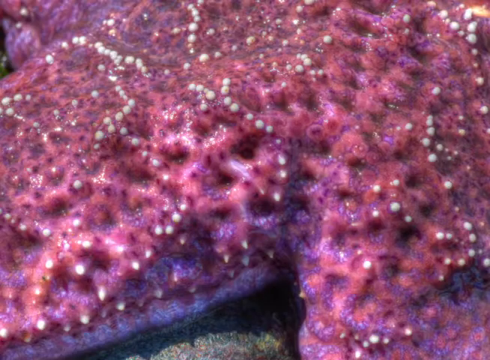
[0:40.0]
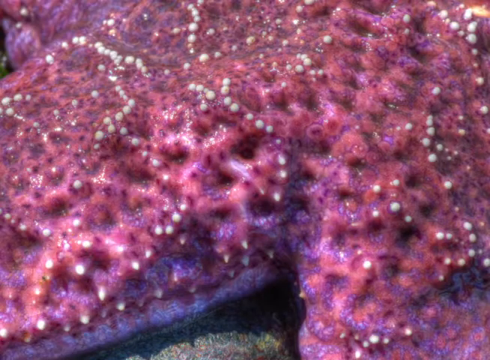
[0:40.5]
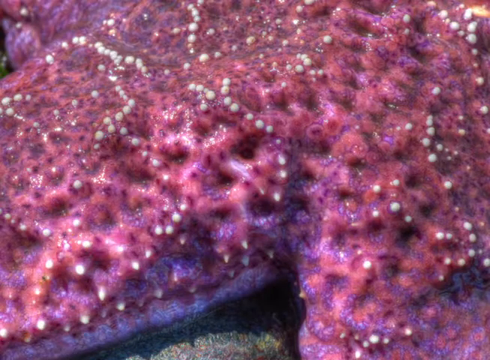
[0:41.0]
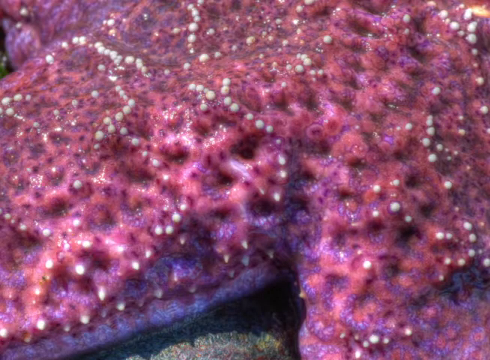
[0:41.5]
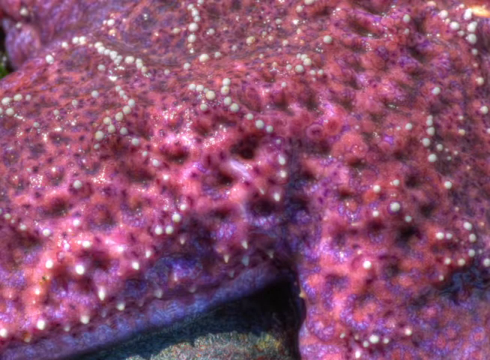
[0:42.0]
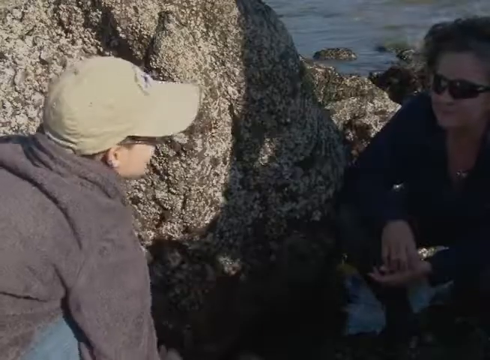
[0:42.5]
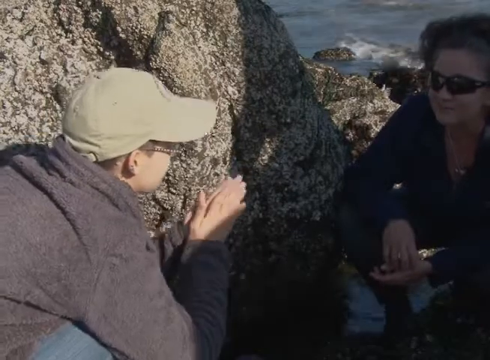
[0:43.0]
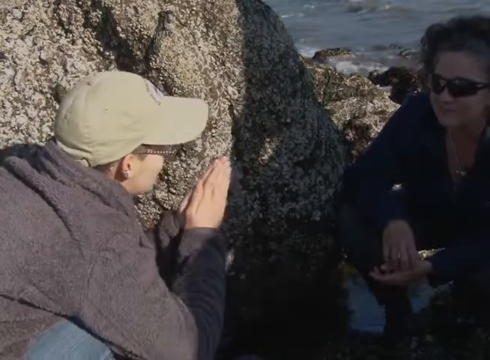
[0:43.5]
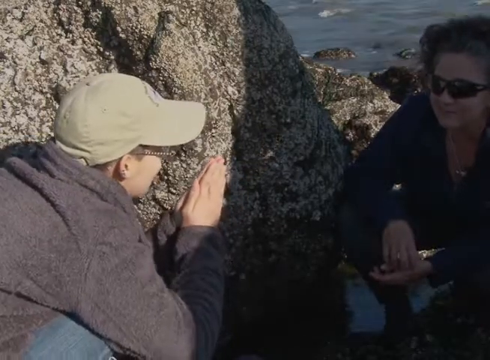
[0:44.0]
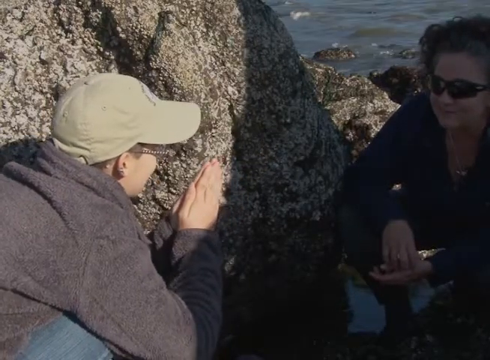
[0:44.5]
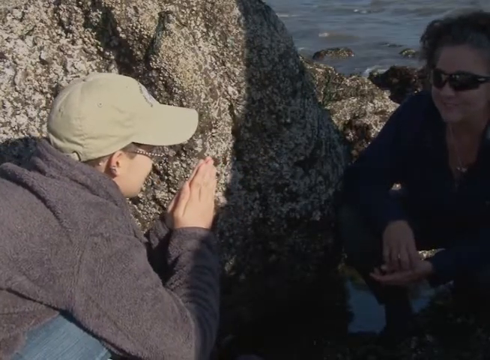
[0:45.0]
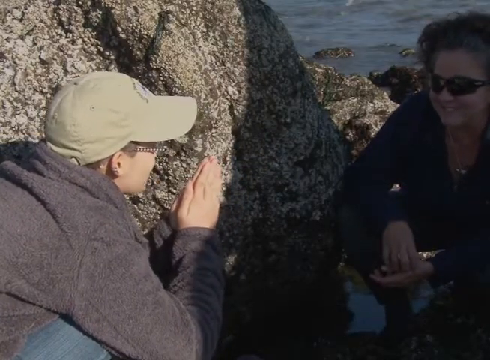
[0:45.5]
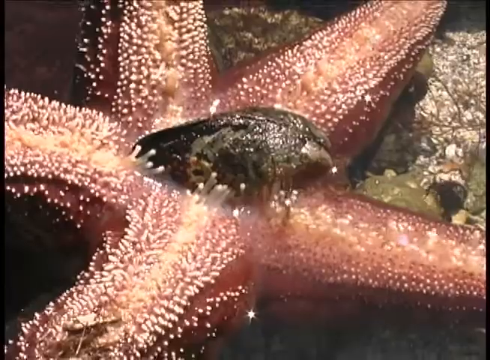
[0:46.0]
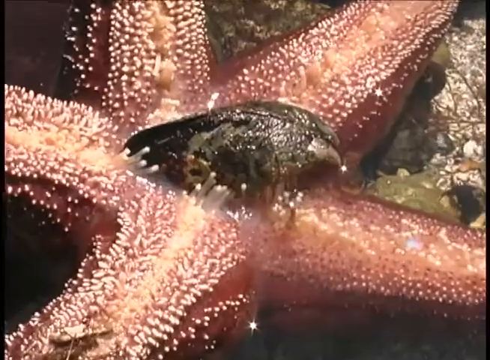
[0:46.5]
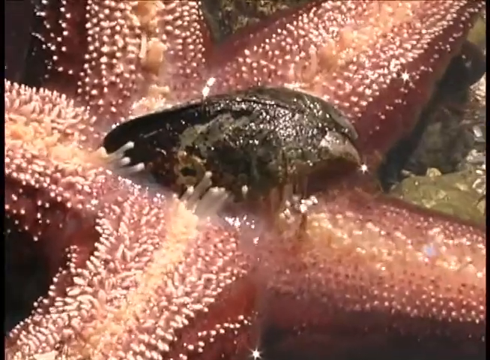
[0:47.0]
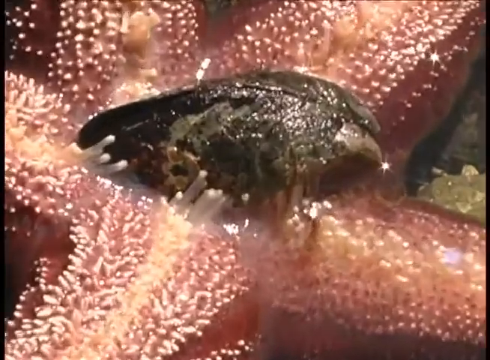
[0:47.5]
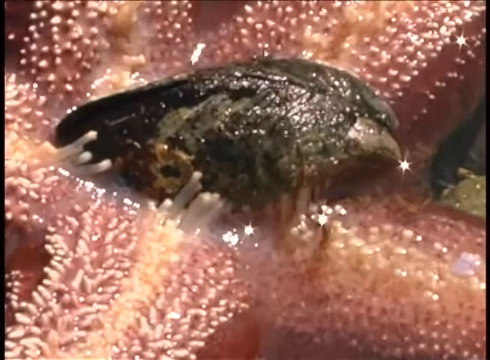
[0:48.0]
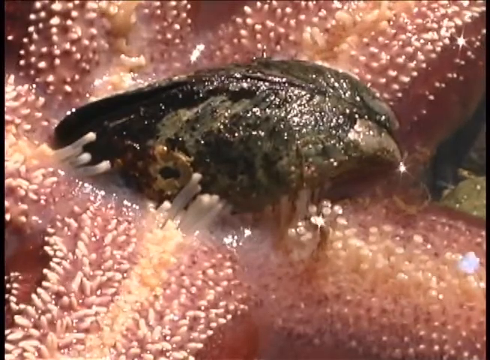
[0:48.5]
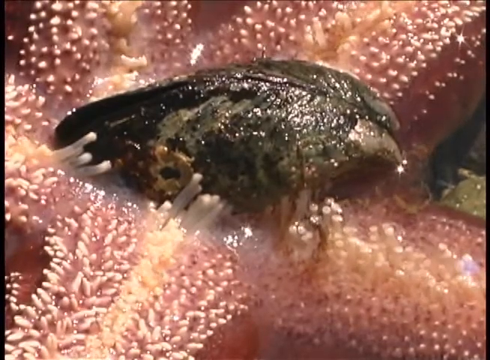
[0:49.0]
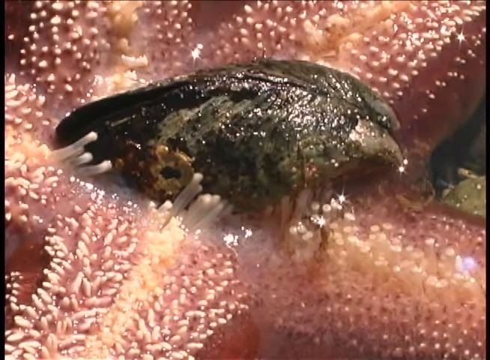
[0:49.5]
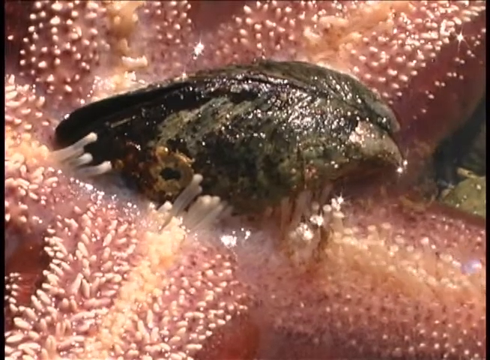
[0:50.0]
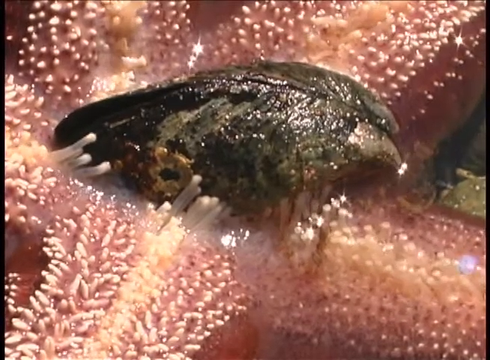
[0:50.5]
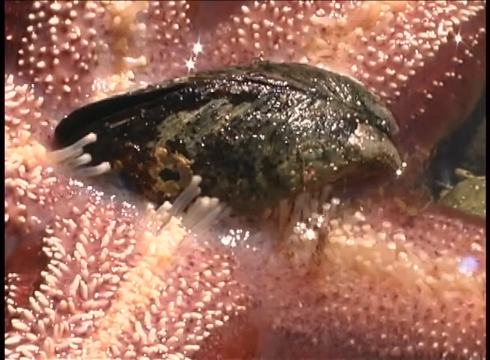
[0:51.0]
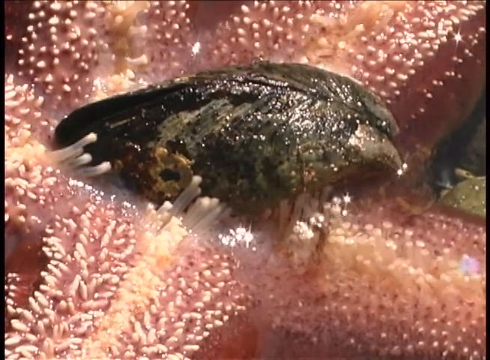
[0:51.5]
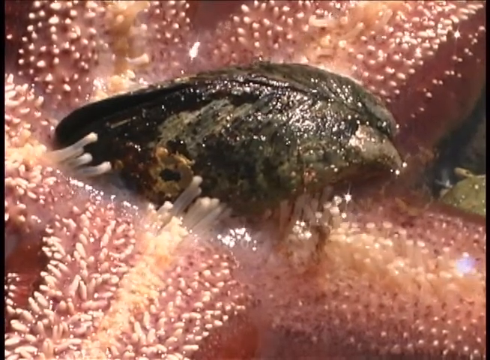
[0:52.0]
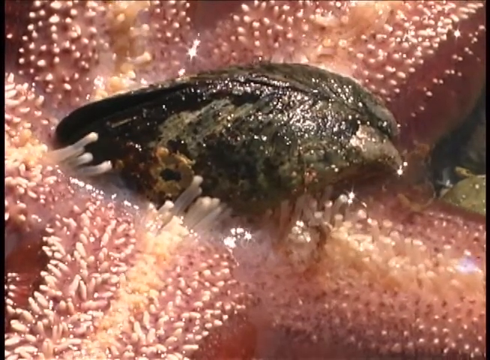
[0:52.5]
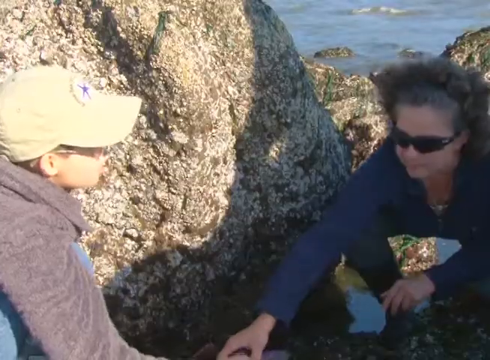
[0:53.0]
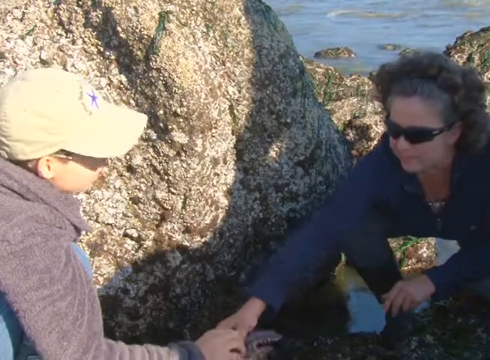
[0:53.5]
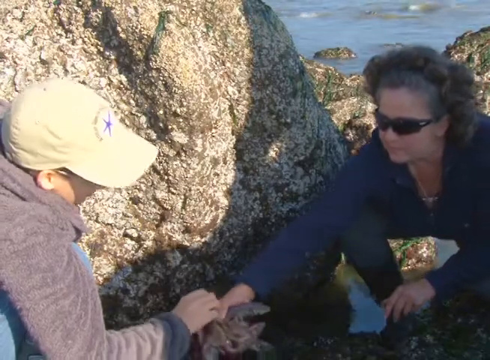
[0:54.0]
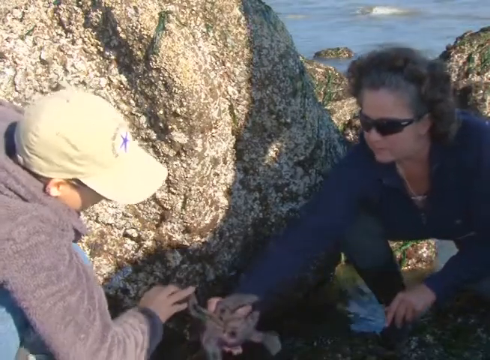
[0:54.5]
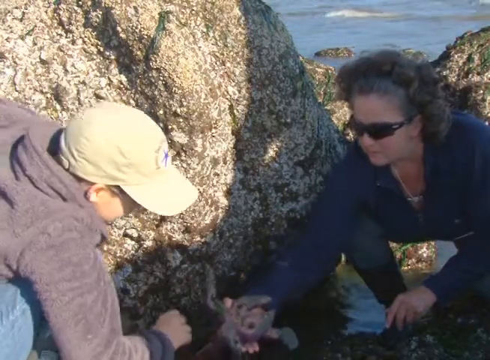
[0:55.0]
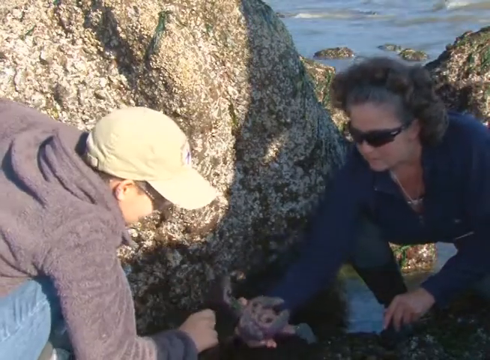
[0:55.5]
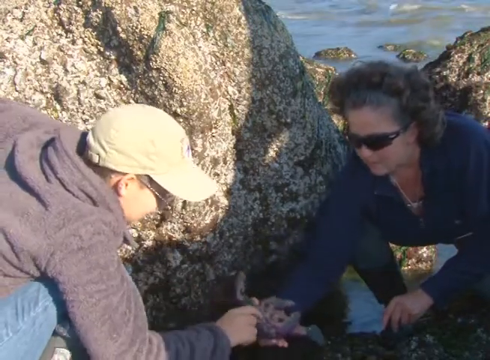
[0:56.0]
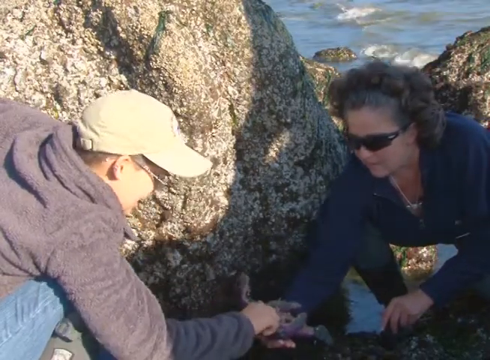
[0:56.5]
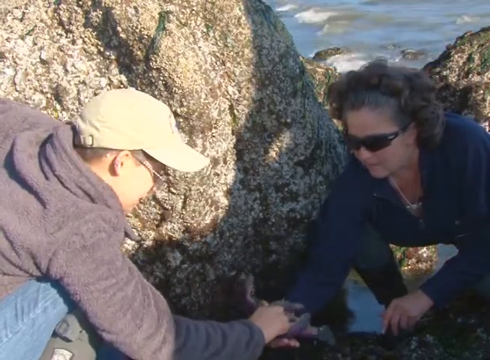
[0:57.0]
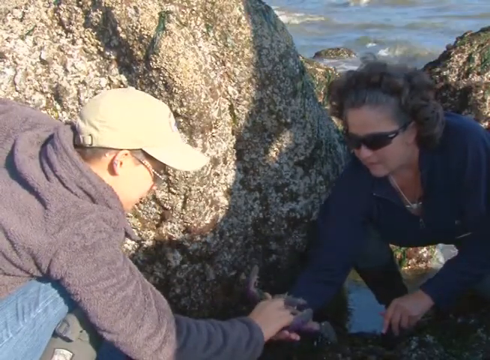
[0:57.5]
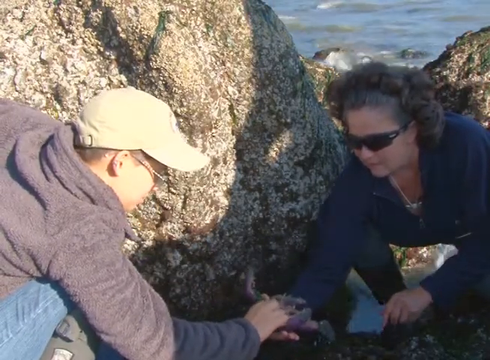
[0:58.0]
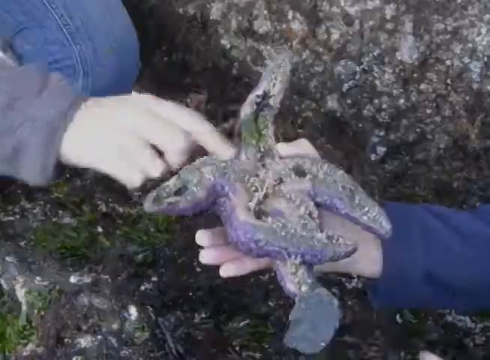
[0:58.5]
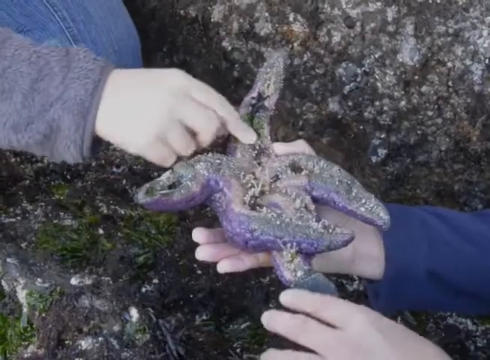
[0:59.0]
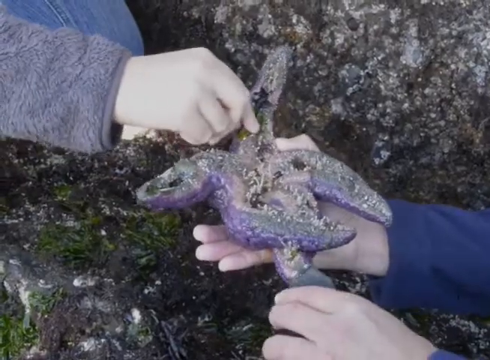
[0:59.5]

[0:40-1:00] More creatures are shown, and the camera pans over to two people, a man and a woman, both white. The woman wears sunglasses and a navy top and has long, flowy hair; she is also wearing jeans. The man wears a beige cap, glasses and a fleece jacket. They talk to each other, seemingly discussing the creatures they are exploring. The camera pans back to the creatures, showing what looks like a starfish. It is red with some white strings, and another creature is attached to it, apparently feeding off the starfish; it is also slimy. The woman reaches out to one of these creatures, and the two of them hold it together and explore it further.